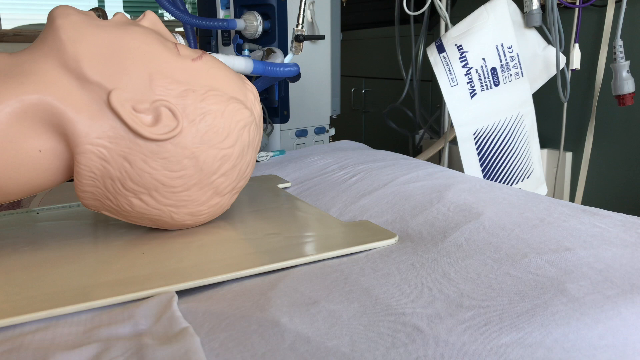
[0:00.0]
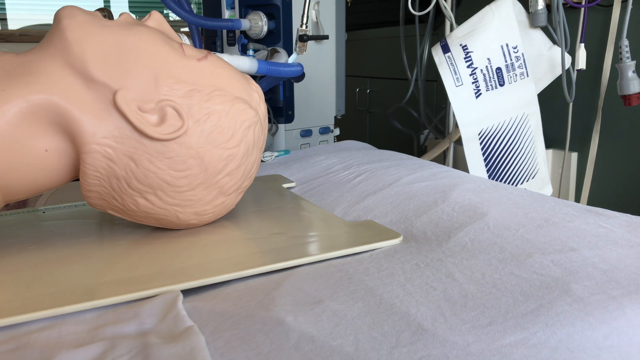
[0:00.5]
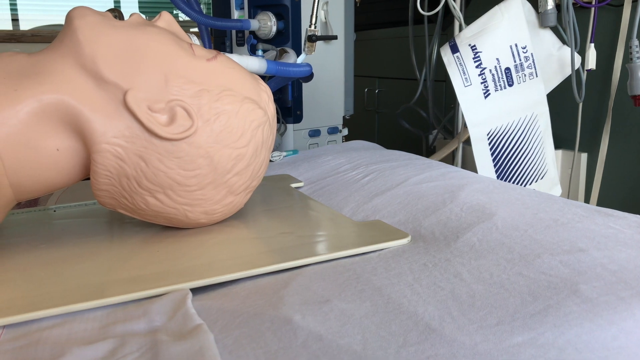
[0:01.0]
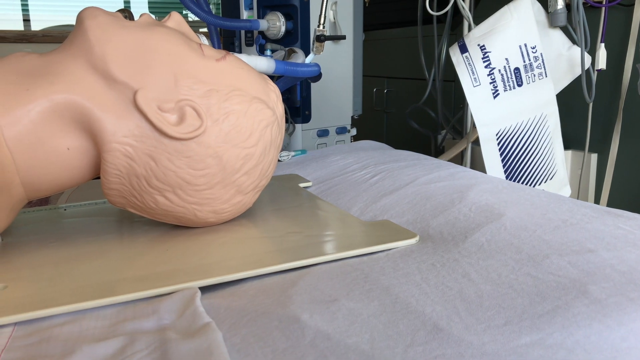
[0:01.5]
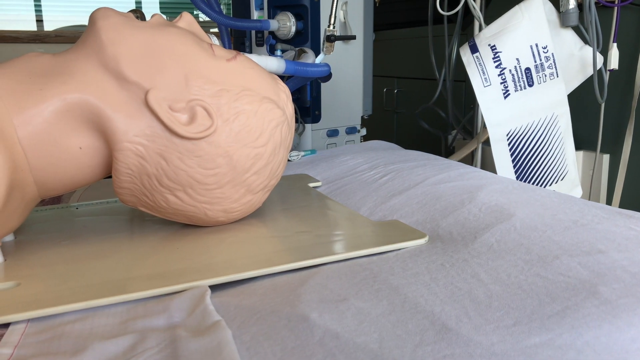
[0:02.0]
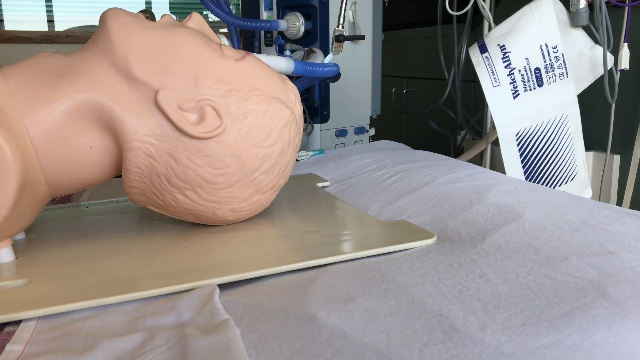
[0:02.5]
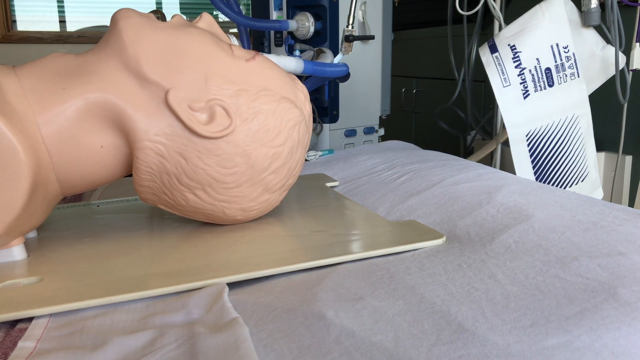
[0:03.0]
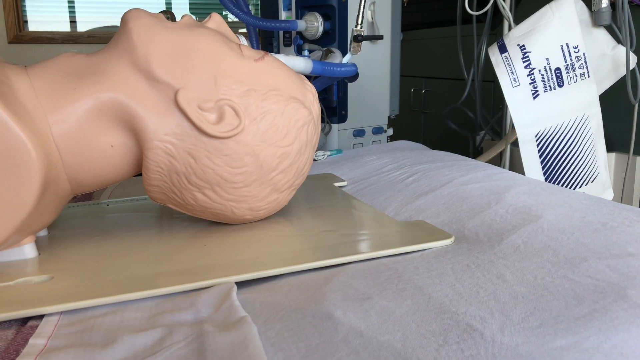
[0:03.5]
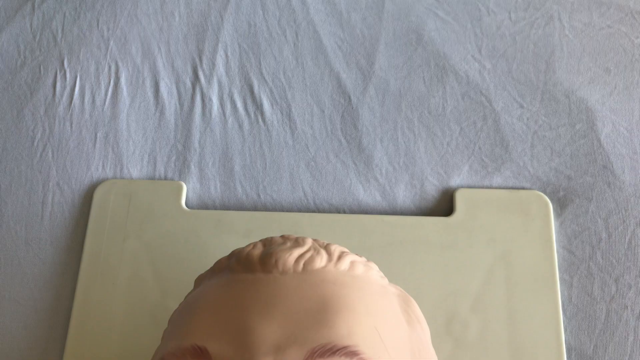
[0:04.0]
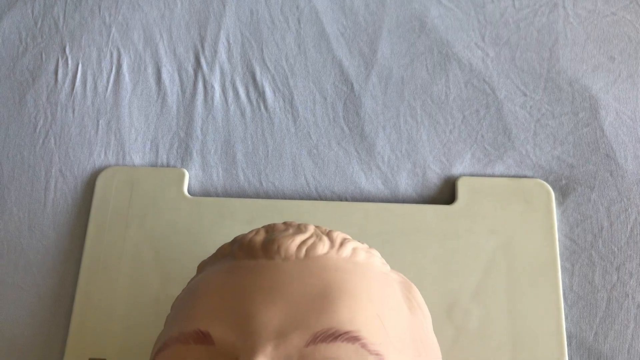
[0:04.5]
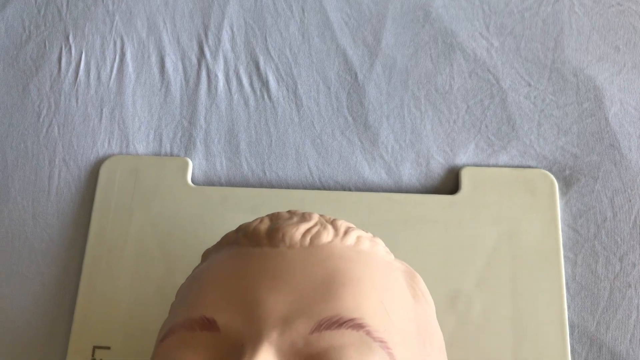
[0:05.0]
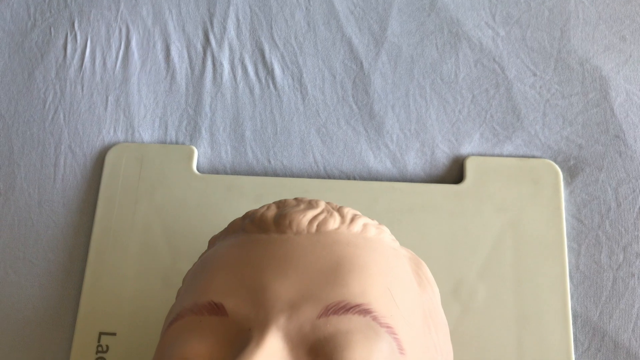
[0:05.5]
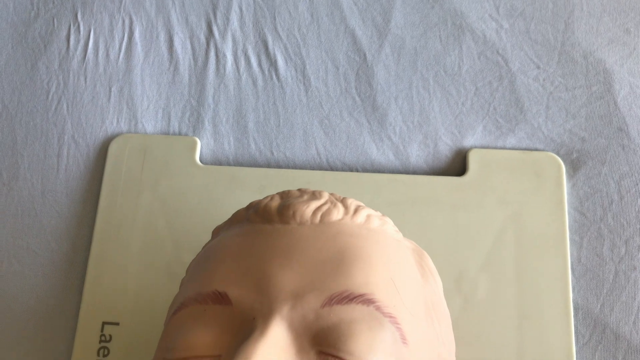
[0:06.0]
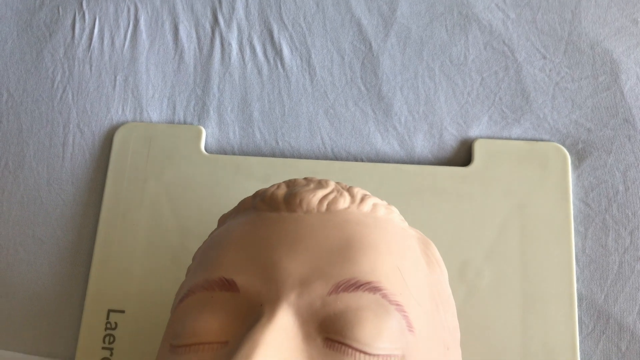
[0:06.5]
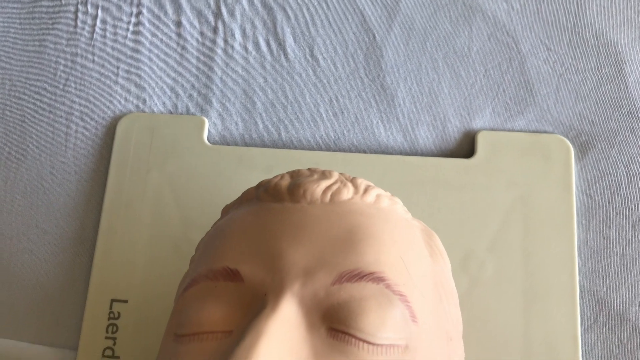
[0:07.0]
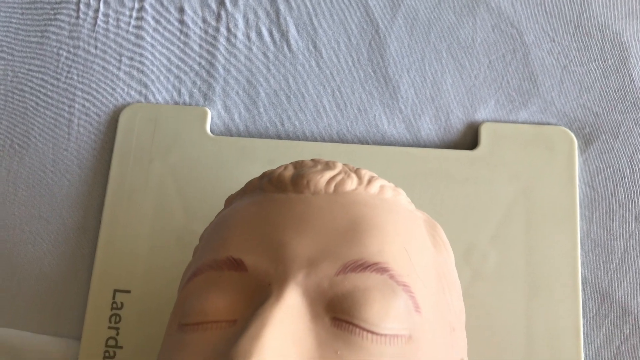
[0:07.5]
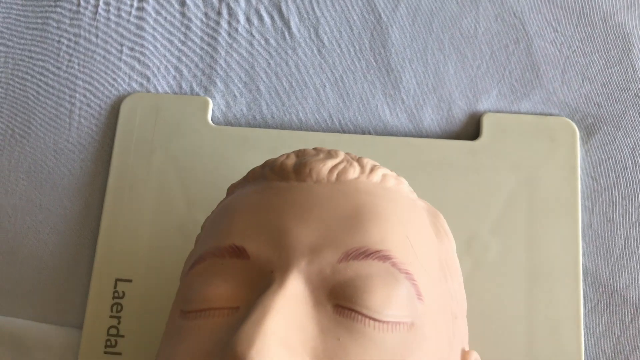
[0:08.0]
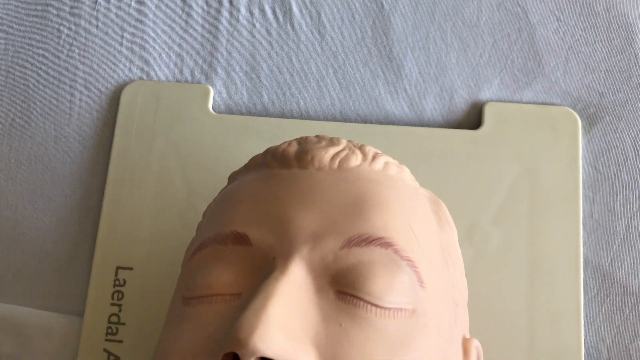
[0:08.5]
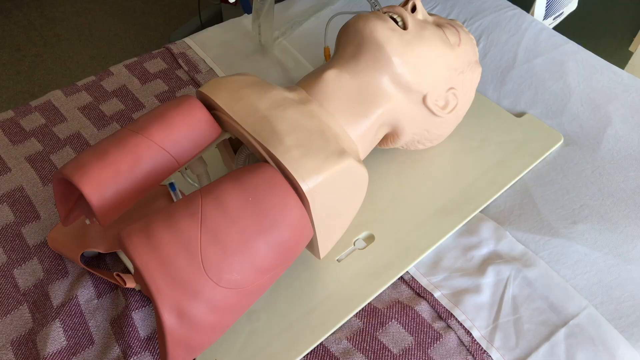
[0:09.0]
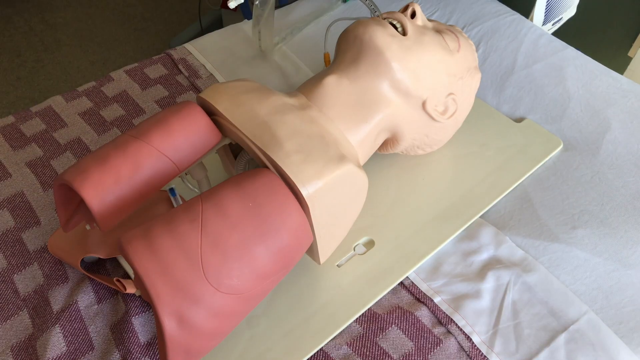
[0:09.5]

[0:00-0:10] The head of a CPR dummy appears on the left-hand side of the screen. The dummy's chin is tilted up and its eyes are closed. Its head rests on a gold board, and the board rests against a gray mattress. In the background are tubes, wires and what looks like medical equipment; the dummy appears to be in a hospital or ambulance setting. The camera pans down, and the view changes to look at the dummy from the top, showing its head, then its neck and then its chest area. The chest abruptly ends, and the dummy is fitted with two red lungs at the bottom. From the top, the dummy is visibly on a hospital bed, with a brown and tan checked coverlet on top of it.